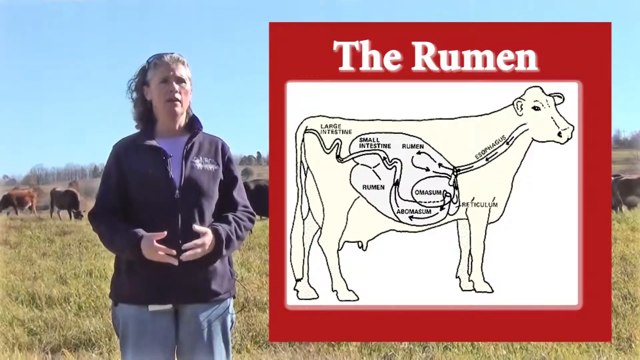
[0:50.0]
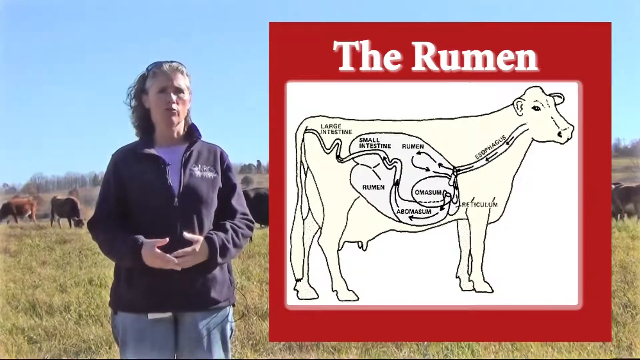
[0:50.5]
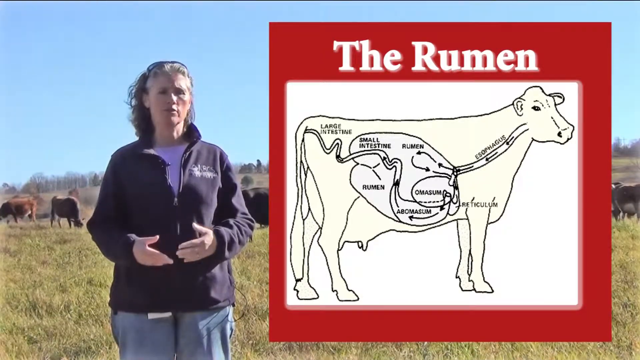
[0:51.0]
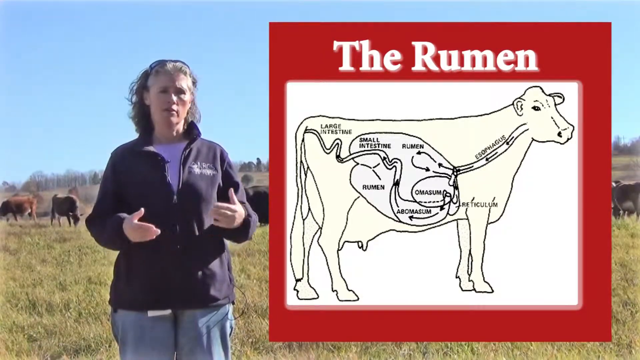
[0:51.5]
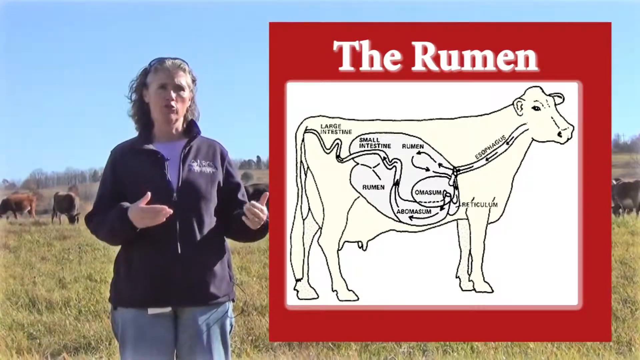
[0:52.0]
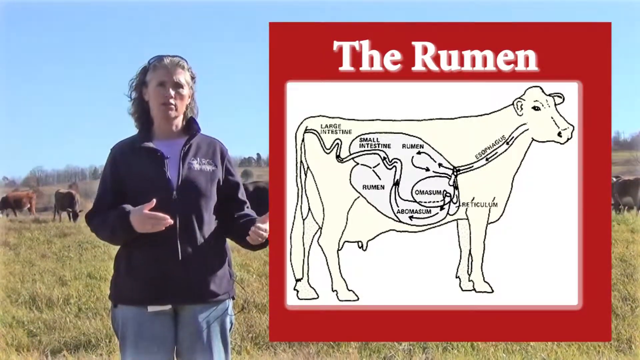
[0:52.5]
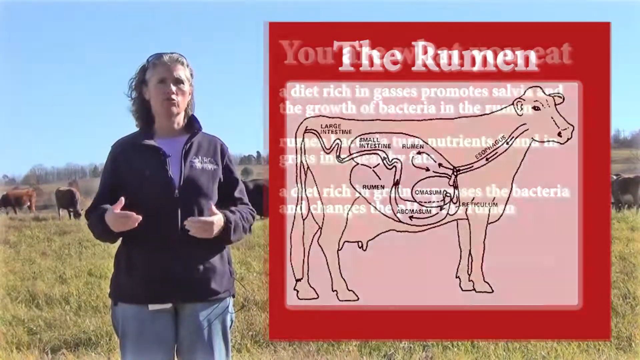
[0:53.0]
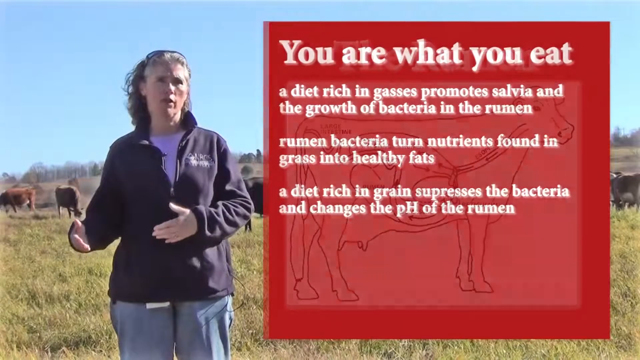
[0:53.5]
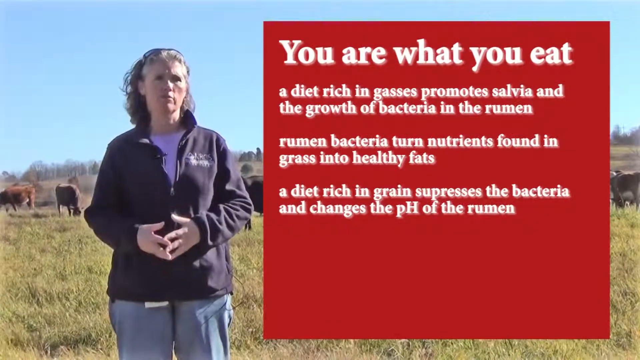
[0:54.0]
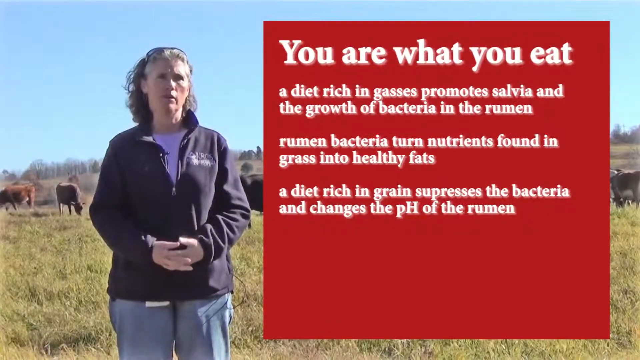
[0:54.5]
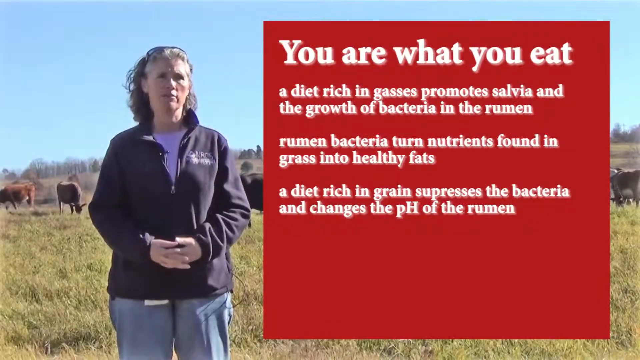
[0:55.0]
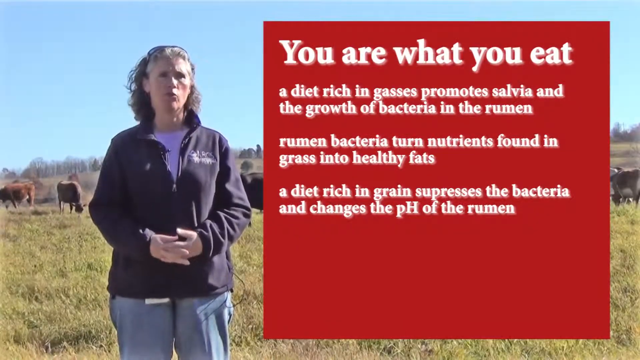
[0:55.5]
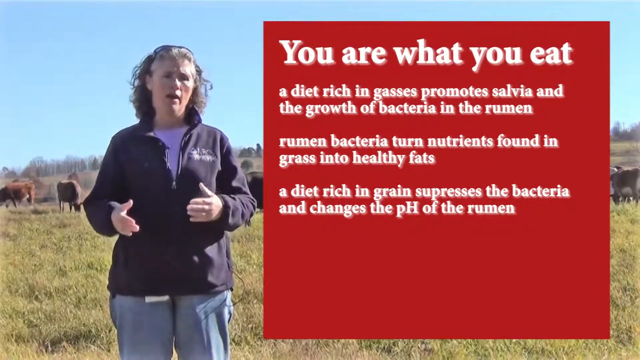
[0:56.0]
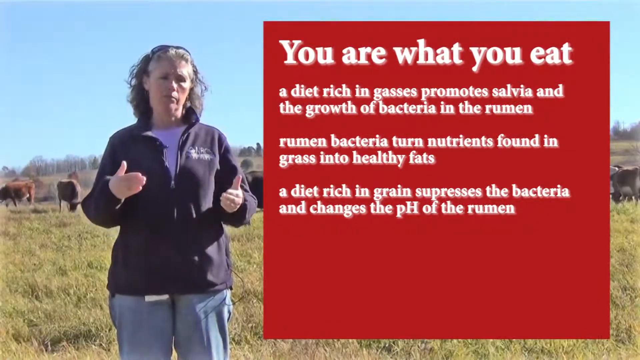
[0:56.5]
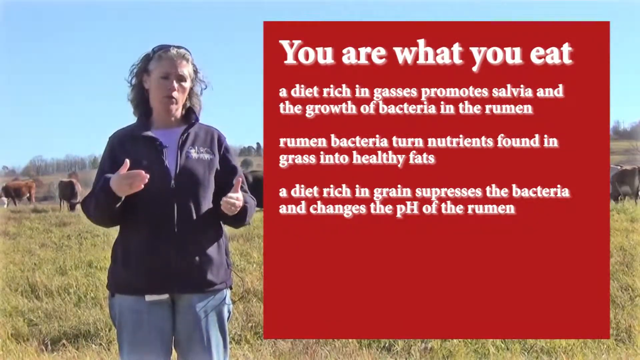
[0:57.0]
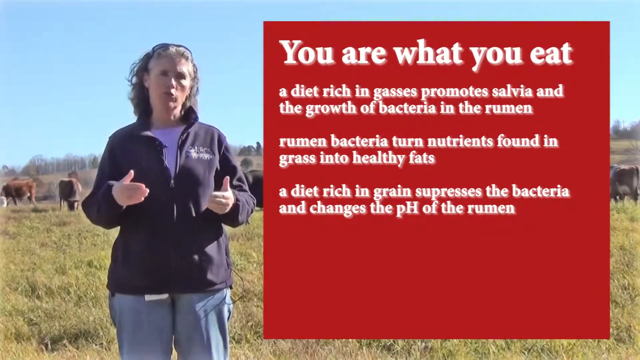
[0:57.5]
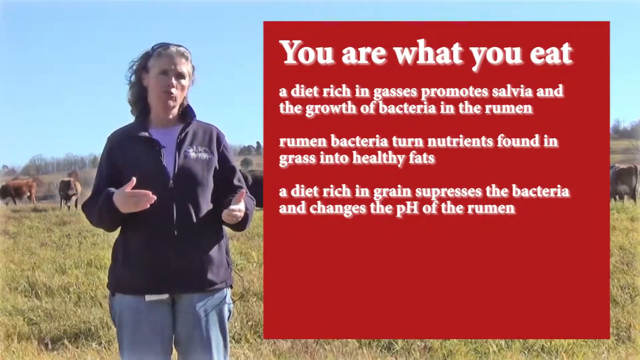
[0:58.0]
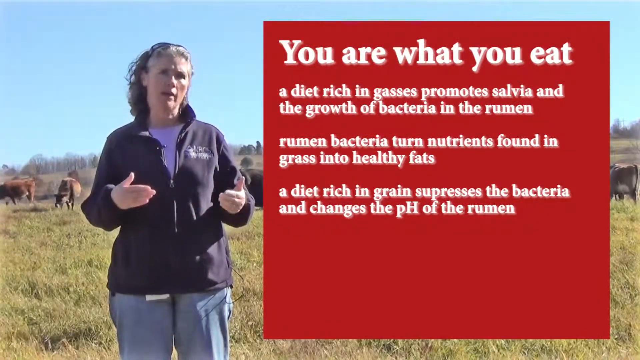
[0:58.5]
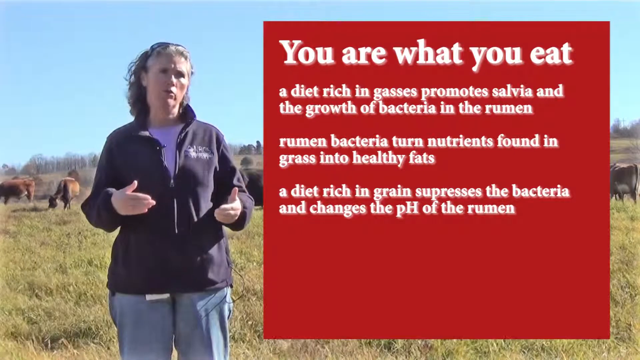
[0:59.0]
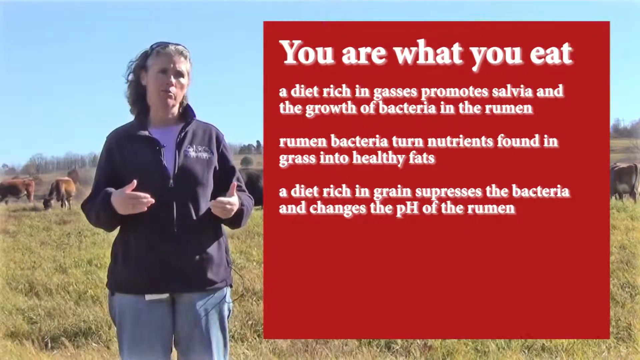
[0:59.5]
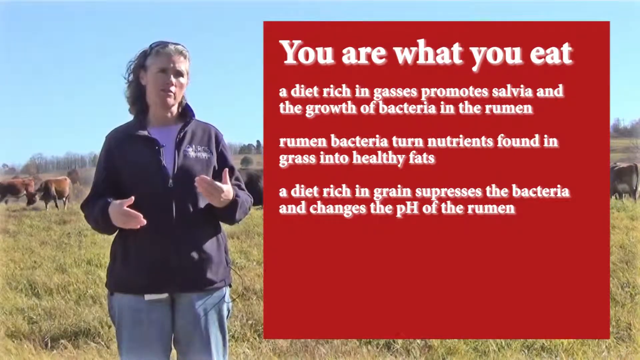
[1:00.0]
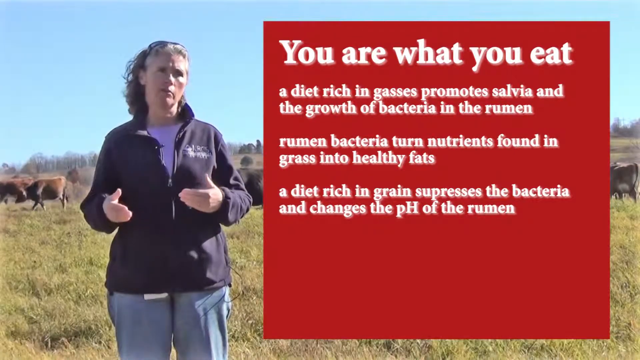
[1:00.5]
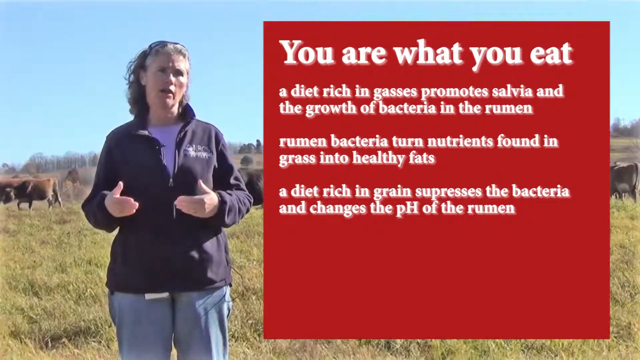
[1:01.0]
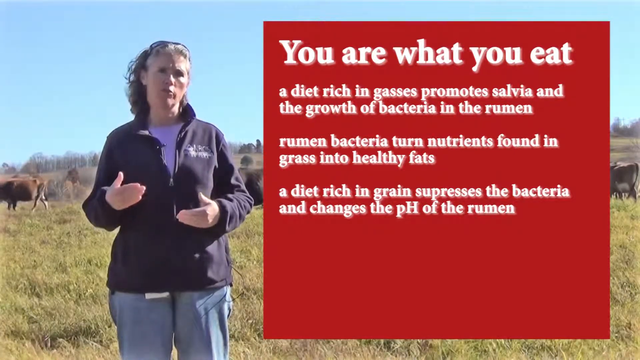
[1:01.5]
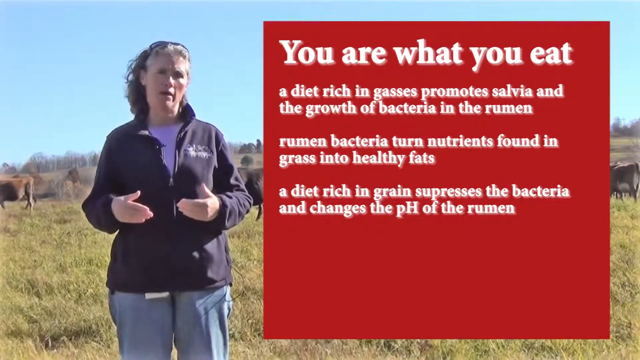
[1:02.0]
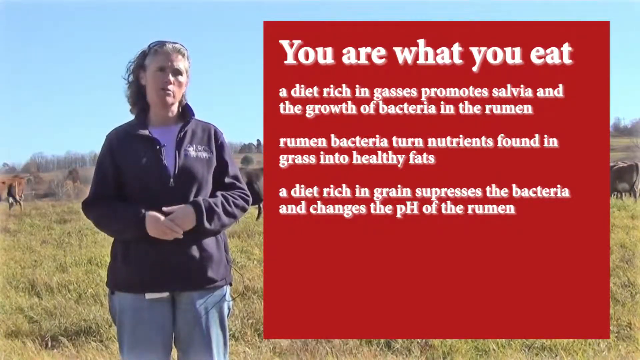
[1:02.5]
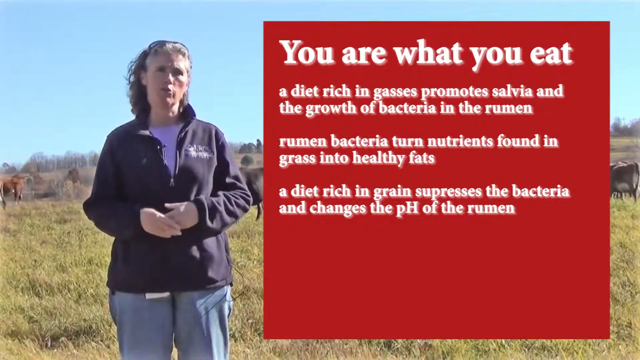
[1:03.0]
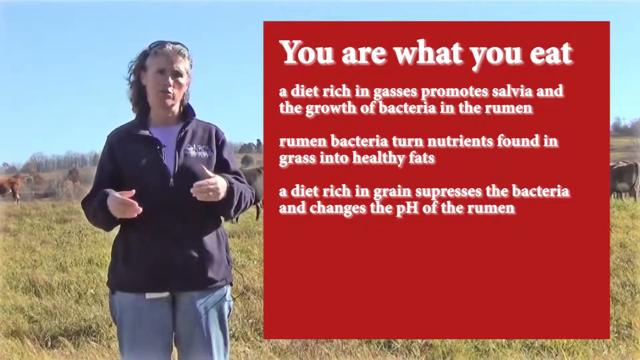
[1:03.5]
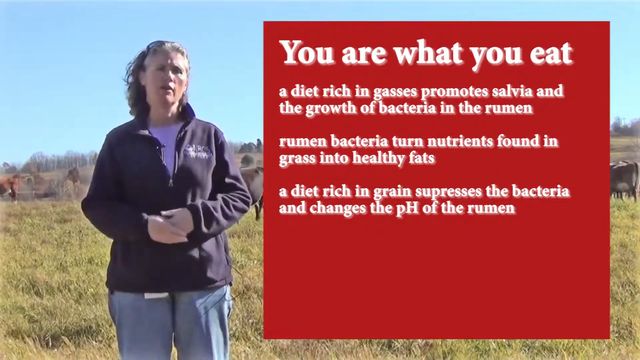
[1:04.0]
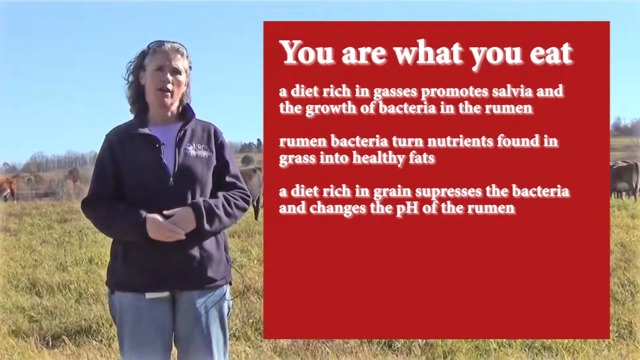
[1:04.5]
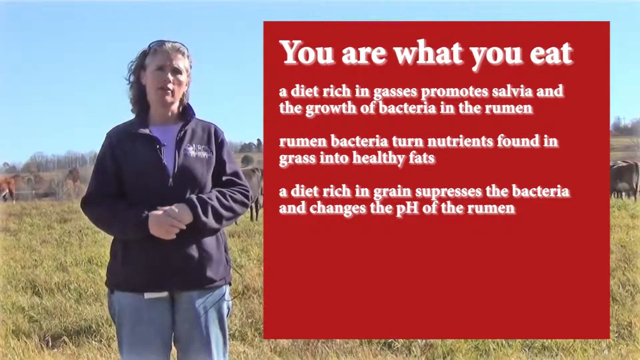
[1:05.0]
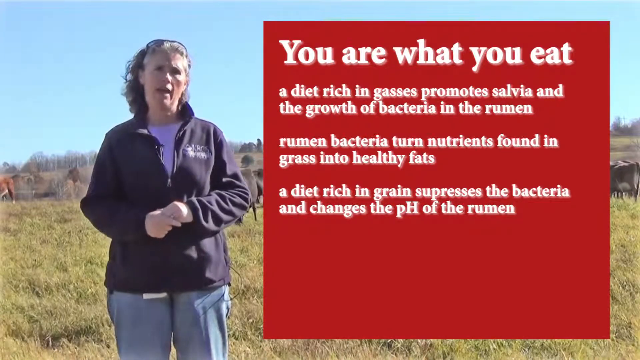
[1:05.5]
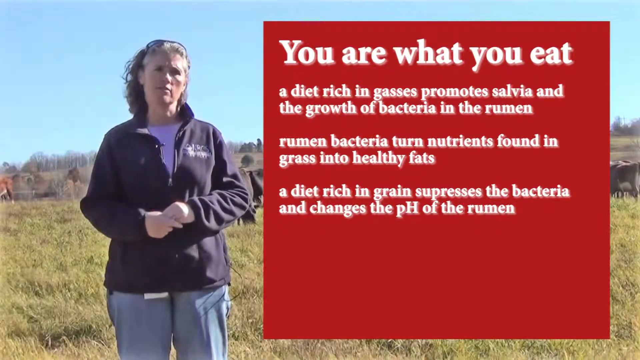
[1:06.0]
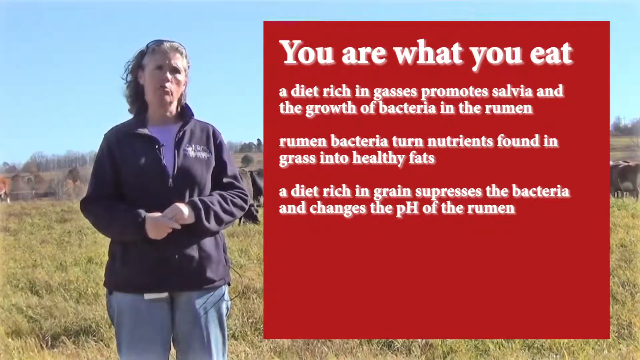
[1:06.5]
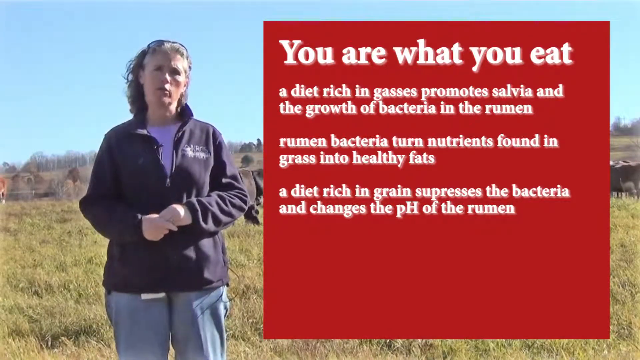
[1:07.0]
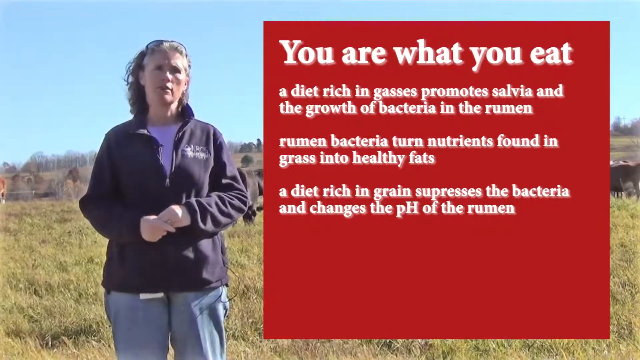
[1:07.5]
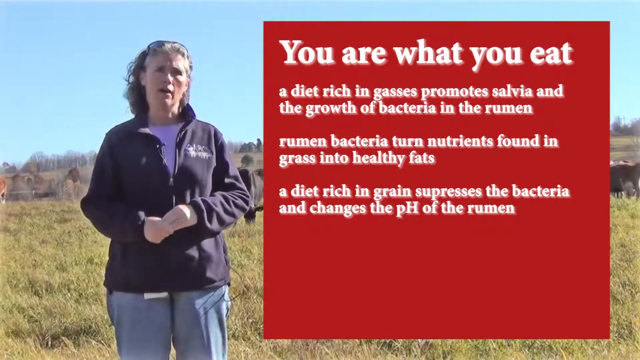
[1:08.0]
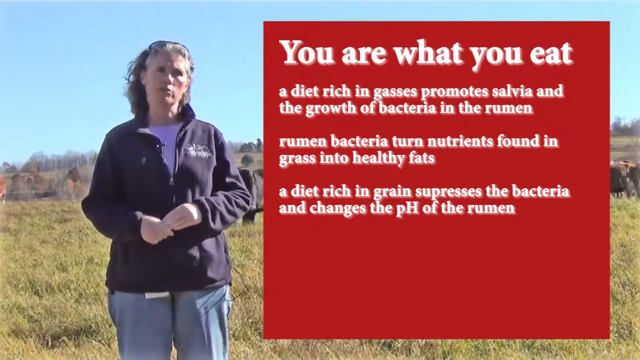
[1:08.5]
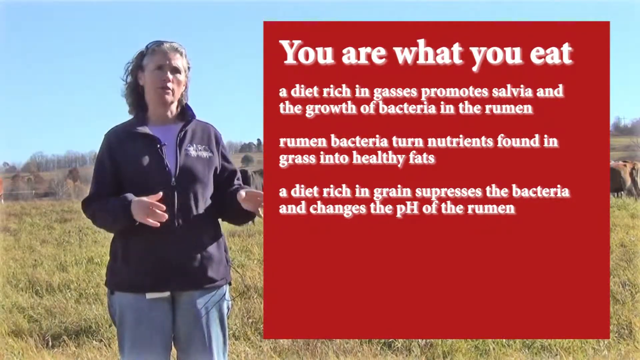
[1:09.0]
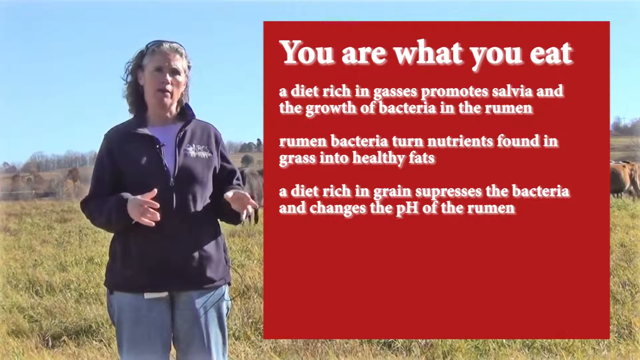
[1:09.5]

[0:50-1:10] The woman stands on the pasture, where cows are feeding and there is grass on the ground. Notes alongside her present CLA, a fatty acid that can help with disorders such as heart disease and with preventing some cancers, and list the benefits of formulating a diet with these ingredients. Omega-3s are also included on the notes as beneficial to the health of dairy cattle. A picture of a cow's digestive system shows the rumen, the different stomachs, the small intestine and the large intestine, with an arrow running from the oesophagus to the large intestine to show how food travels through the cow's digestive system. The woman makes movements. Another note, headed "what you eat", says that a diet rich in grass promotes saliva, that rumen bacteria turn nutrients found in grass into healthy fat, and that a diet rich in grain suppresses the bacteria and changes the pH of the rumen.